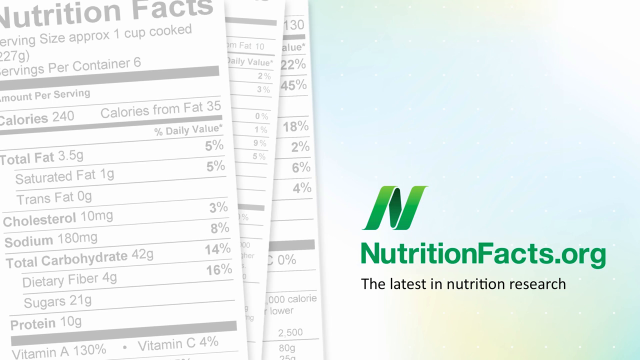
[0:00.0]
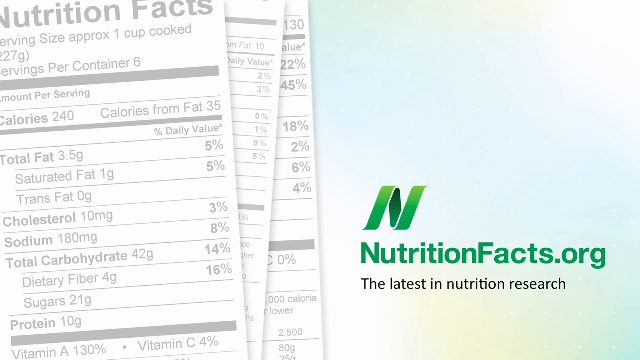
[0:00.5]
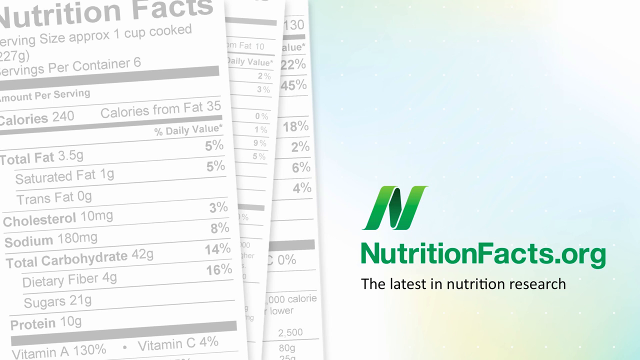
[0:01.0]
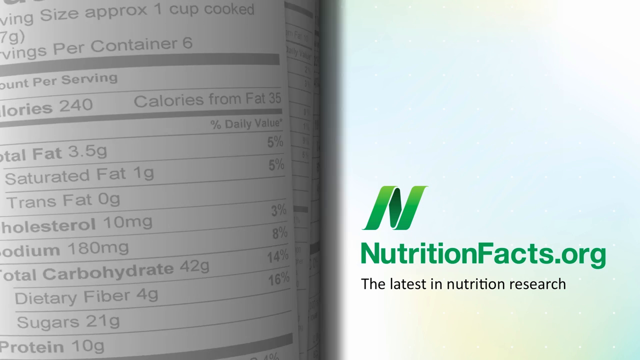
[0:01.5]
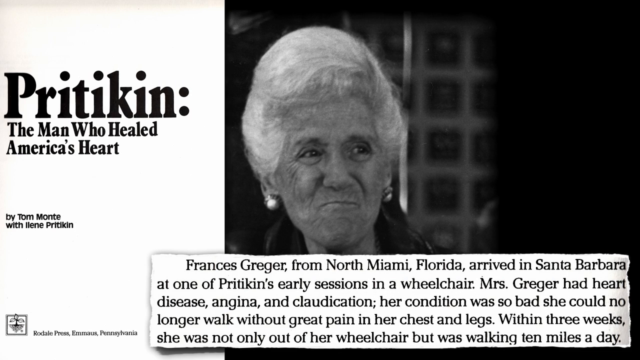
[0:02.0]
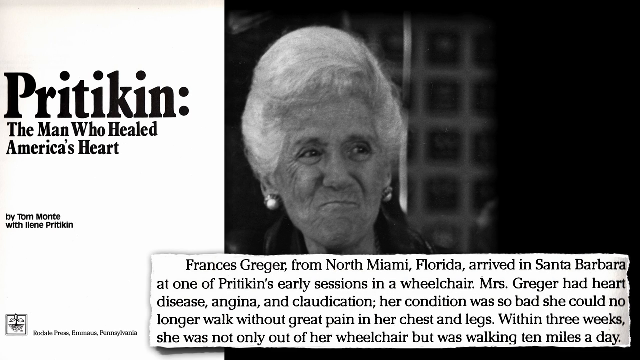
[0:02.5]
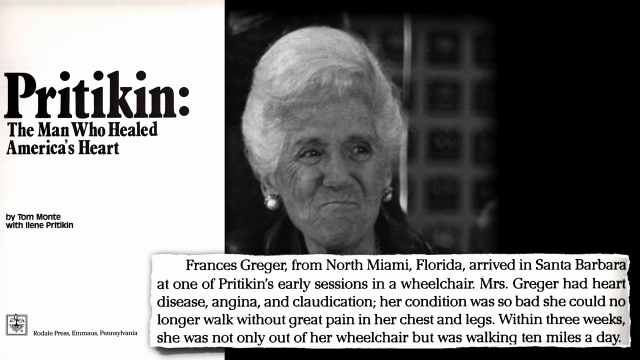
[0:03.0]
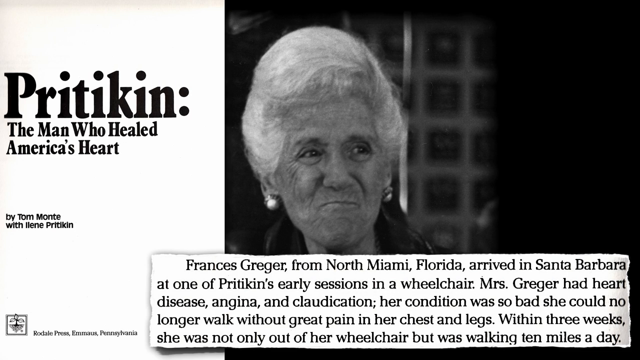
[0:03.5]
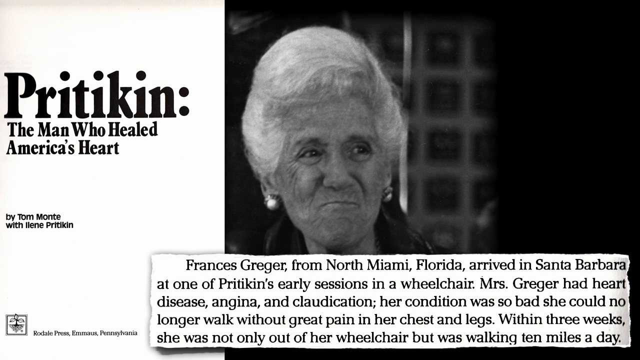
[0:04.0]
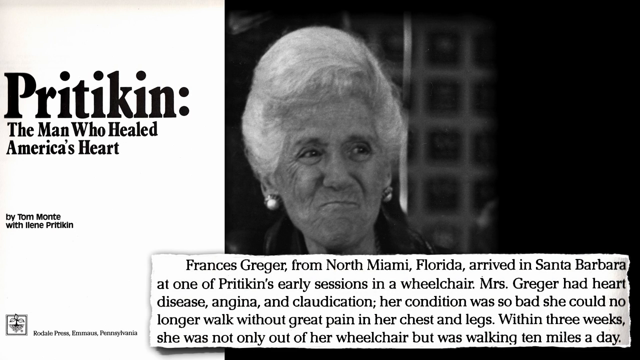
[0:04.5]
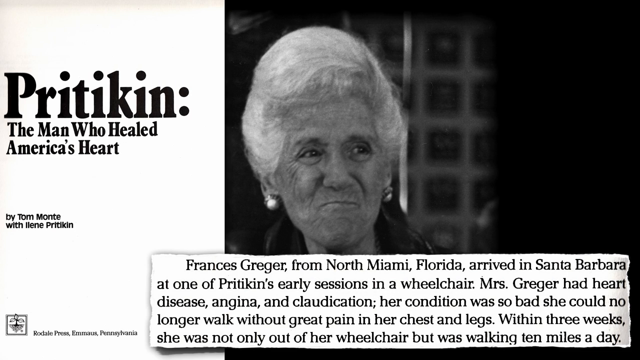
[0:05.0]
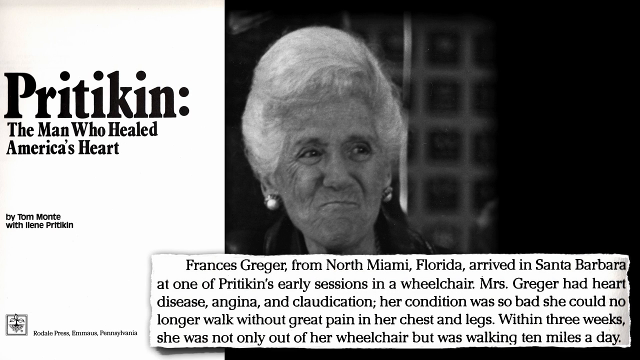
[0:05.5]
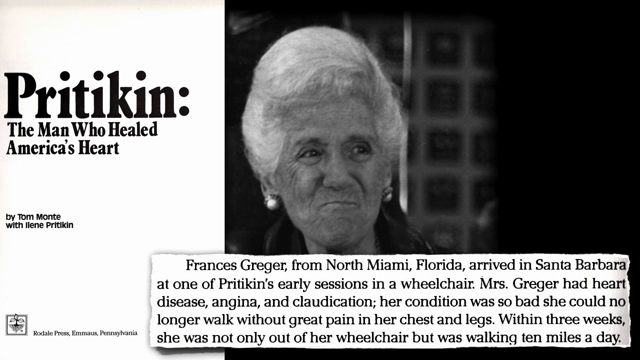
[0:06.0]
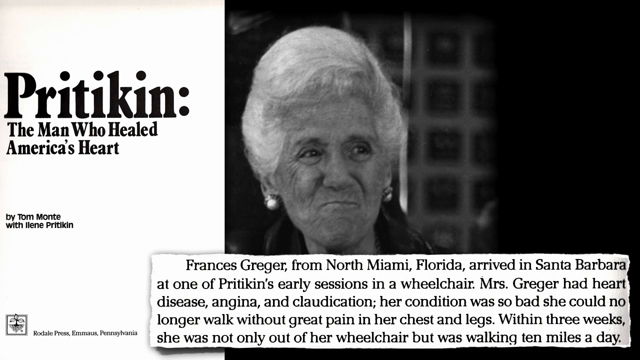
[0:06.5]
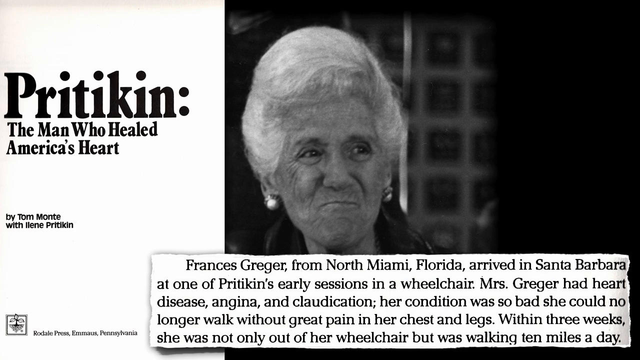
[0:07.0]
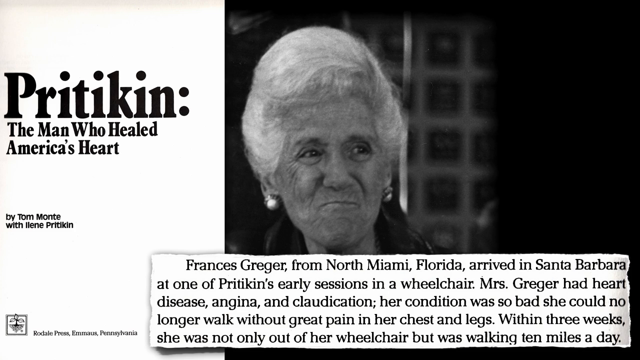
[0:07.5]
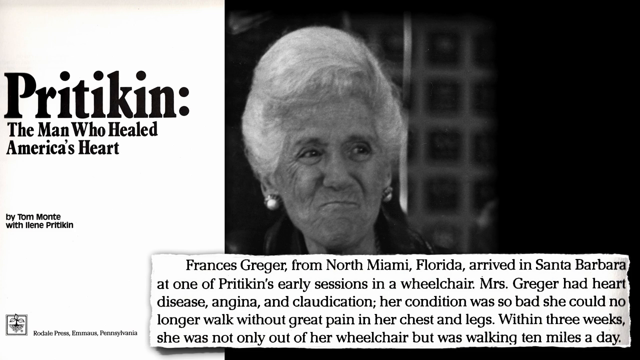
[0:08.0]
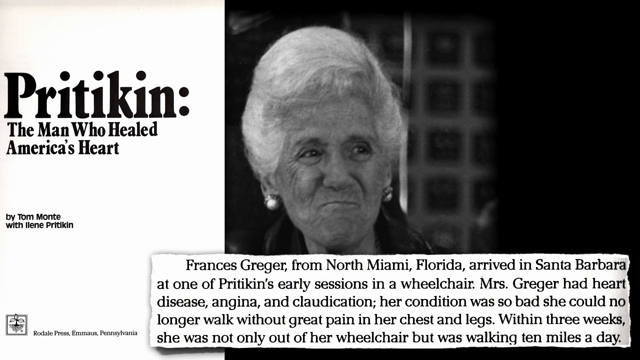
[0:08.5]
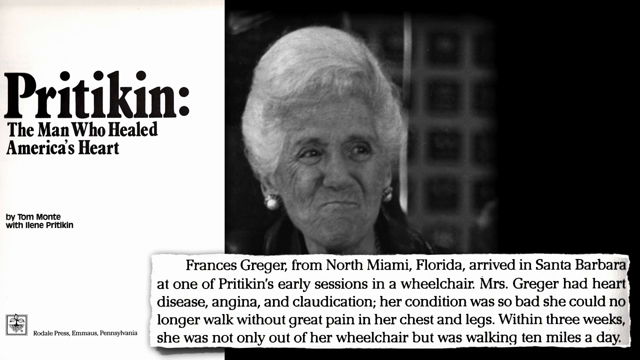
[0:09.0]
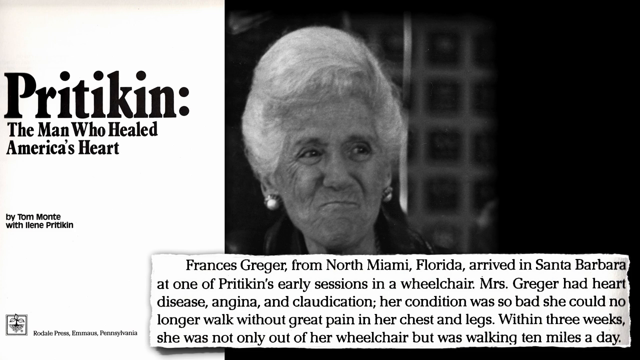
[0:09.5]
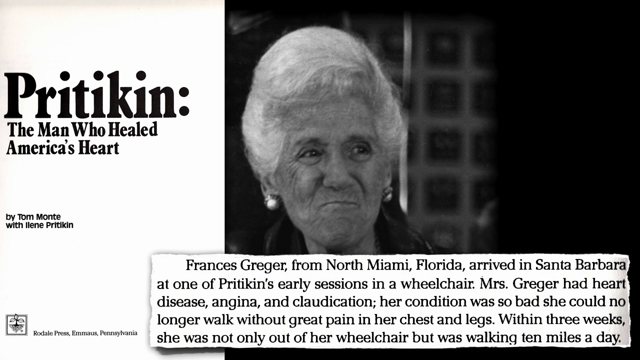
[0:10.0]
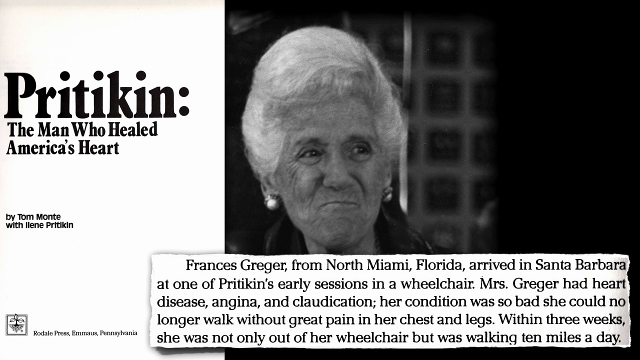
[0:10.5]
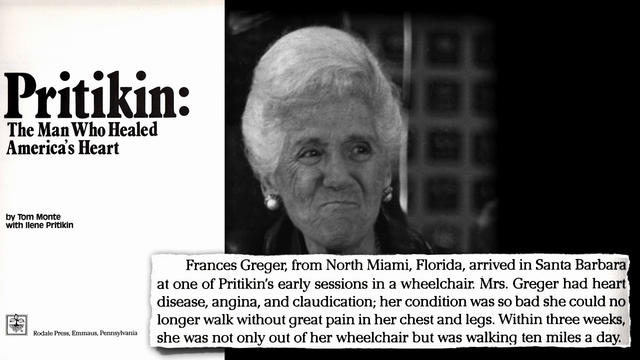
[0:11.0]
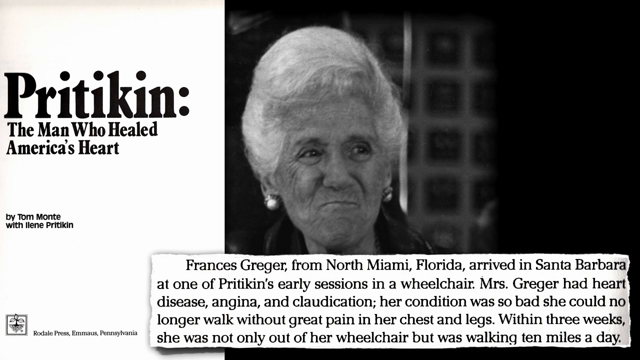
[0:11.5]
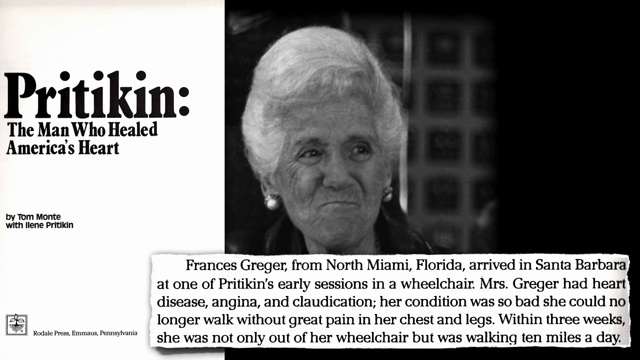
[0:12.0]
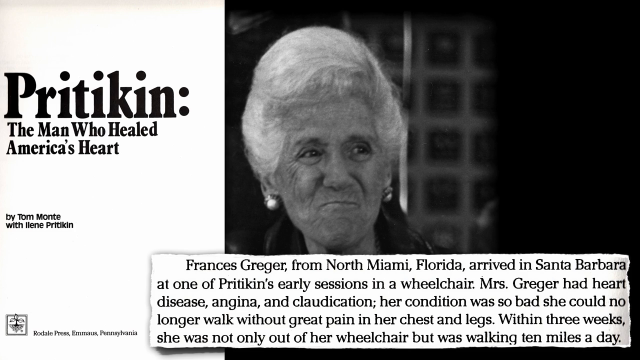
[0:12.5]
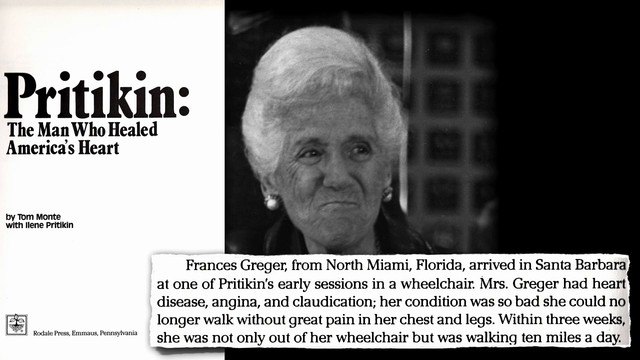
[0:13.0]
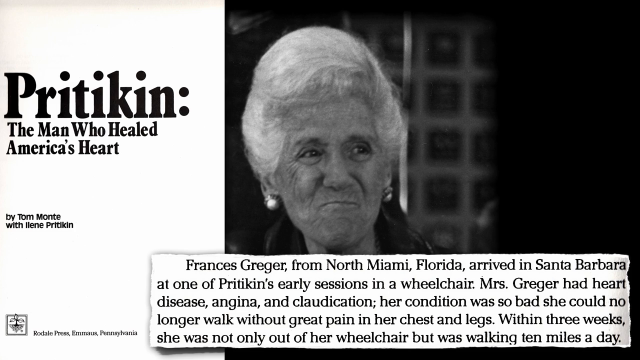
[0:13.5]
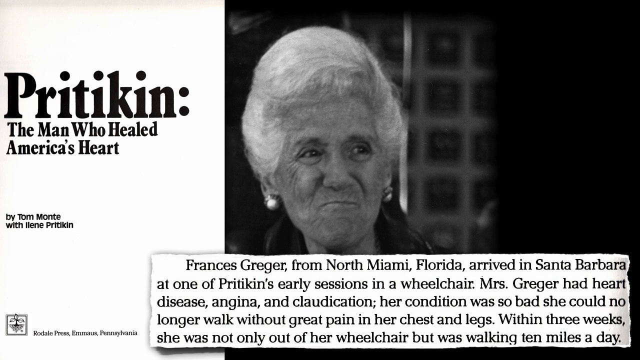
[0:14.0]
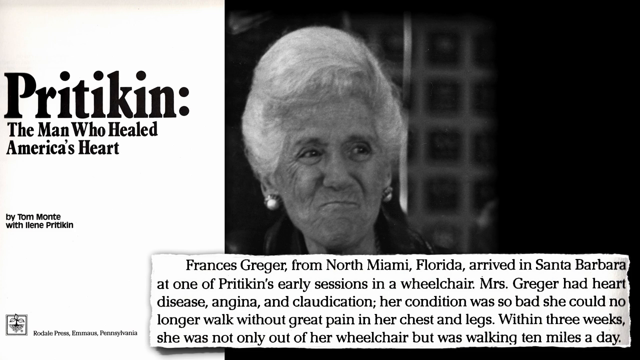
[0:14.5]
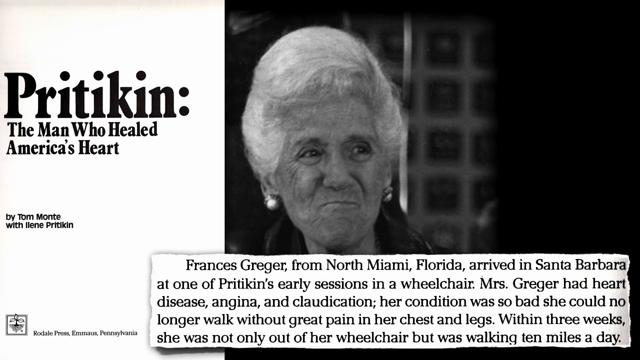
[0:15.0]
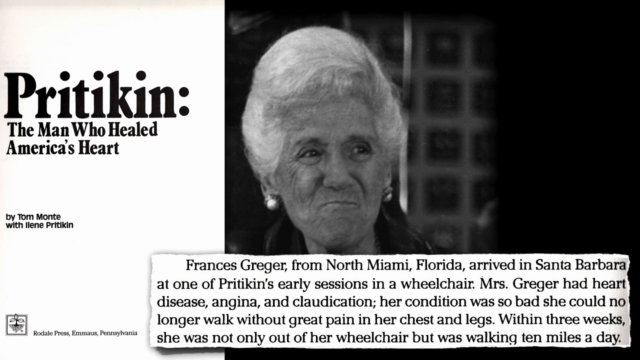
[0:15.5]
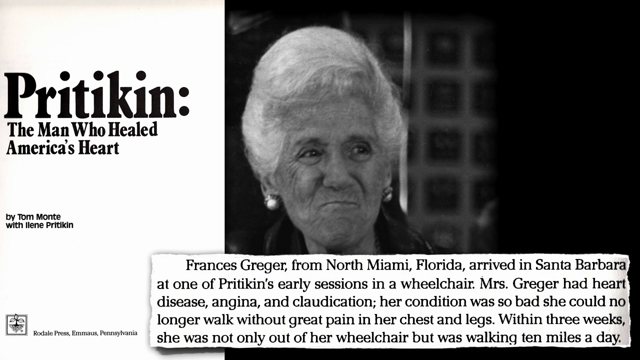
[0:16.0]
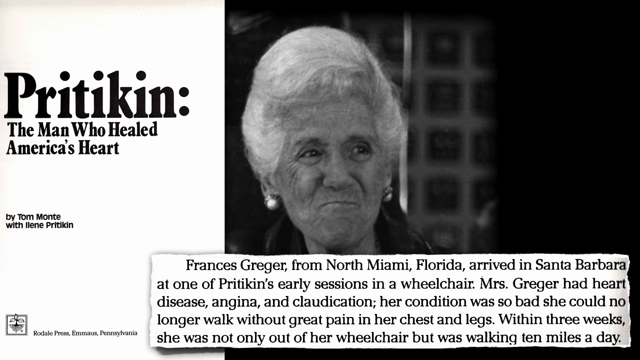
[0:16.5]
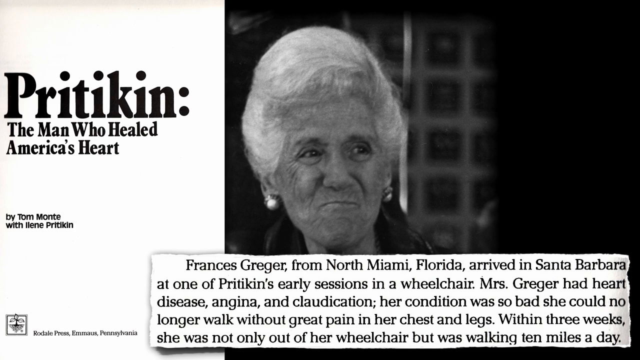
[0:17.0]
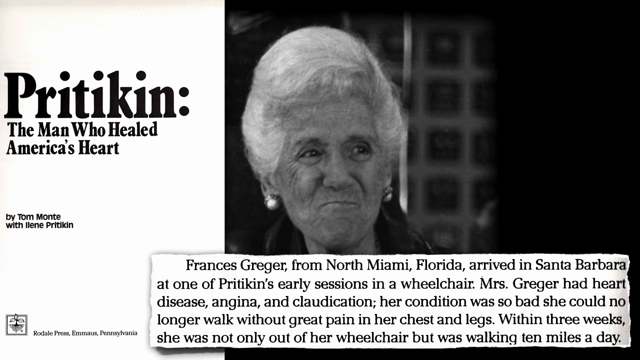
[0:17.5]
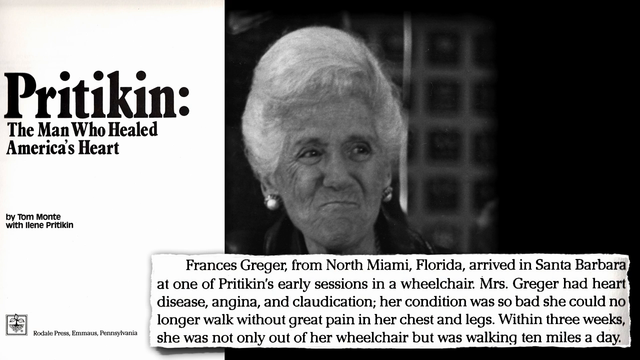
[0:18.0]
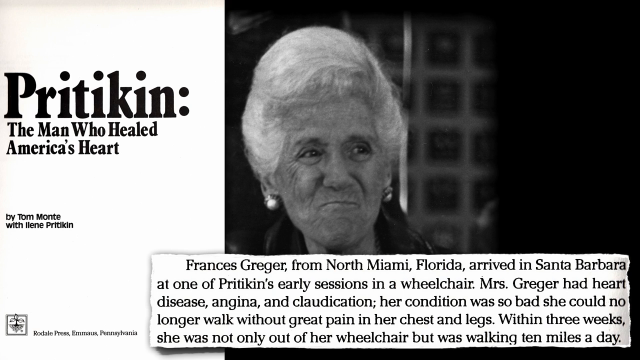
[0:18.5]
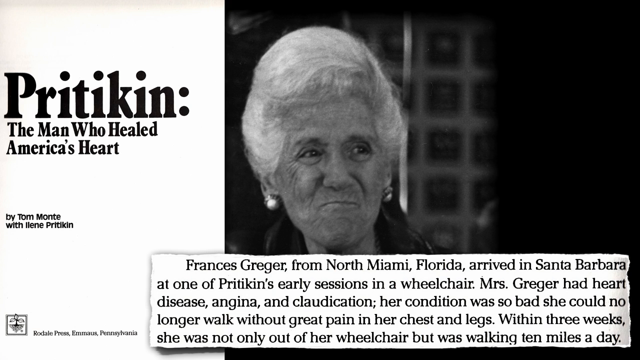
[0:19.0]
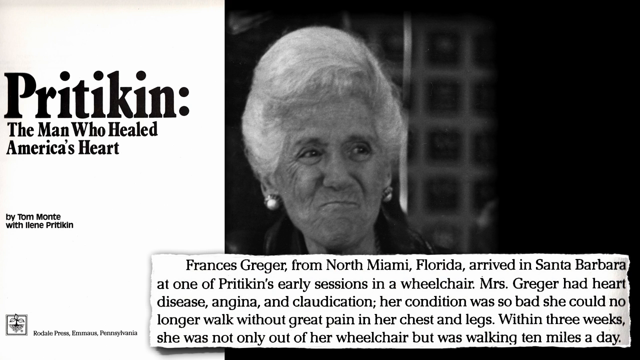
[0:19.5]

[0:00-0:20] The video is from nutritionfacts.org; "nutritionfacts.org" appears in green in the lower right corner, with an N by it. First a nutrition facts label appears, showing items such as "calories 240", as the video flicks through. Next, "Pritikin" appears in the upper left corner, with "the man who healed America's heart" by Tom Mont with Irene Pritikin. The text reads "Francis Greger from North Miami, Florida arrived at Santa Barbara at one of Pritikin's early sessions in a wheelchair. Mrs. Greger had heart disease angina", then "her condition was so bad she could no longer walk without great pain in her chest and legs", and "within three weeks she was not only out of her wheelchair but was walking 10 miles a day". Above this is an older woman with gray hair looking toward the right, in what looks like a newspaper clipping.